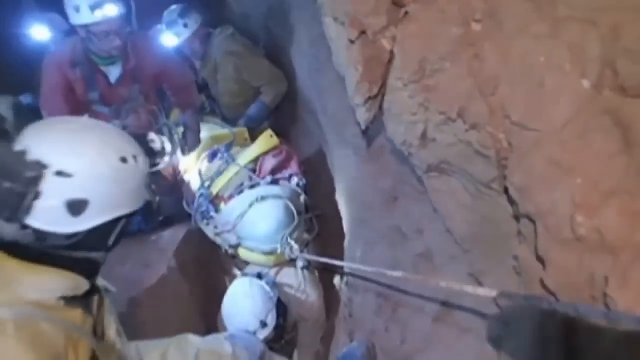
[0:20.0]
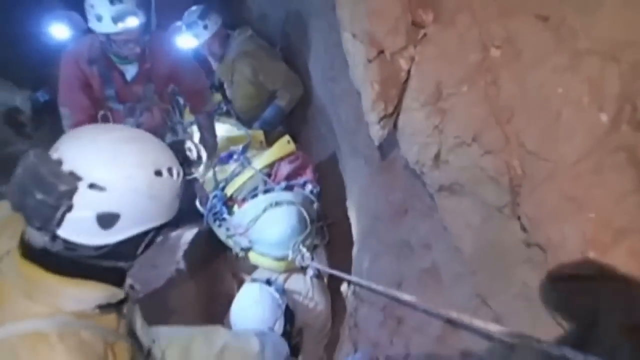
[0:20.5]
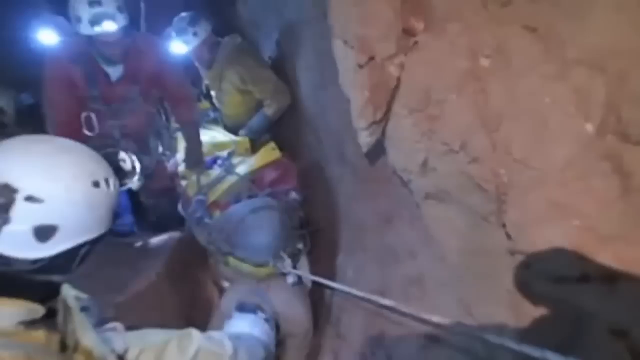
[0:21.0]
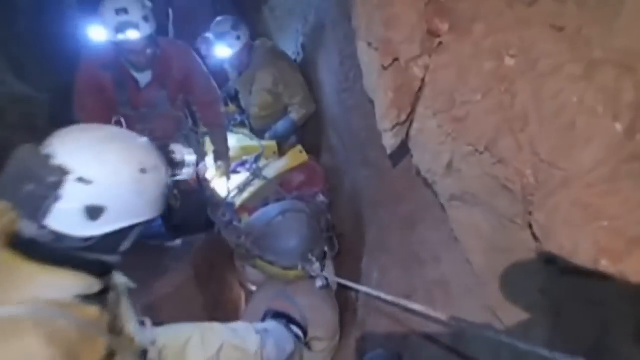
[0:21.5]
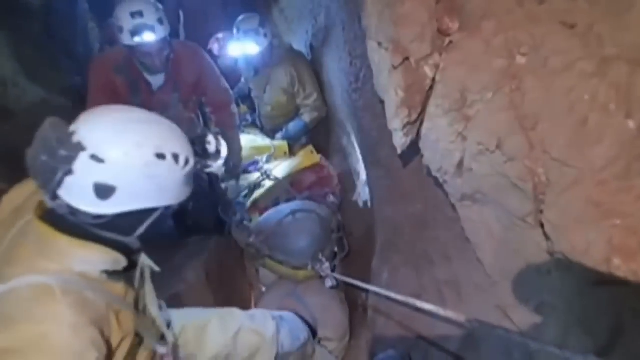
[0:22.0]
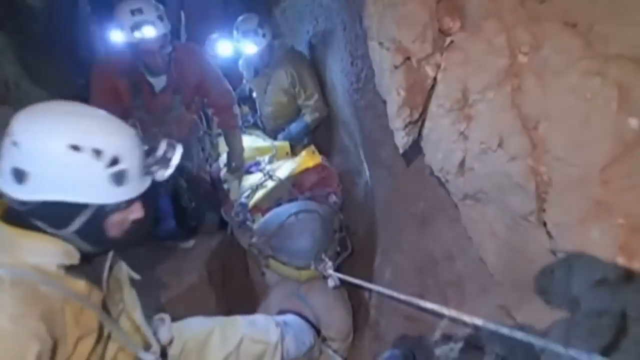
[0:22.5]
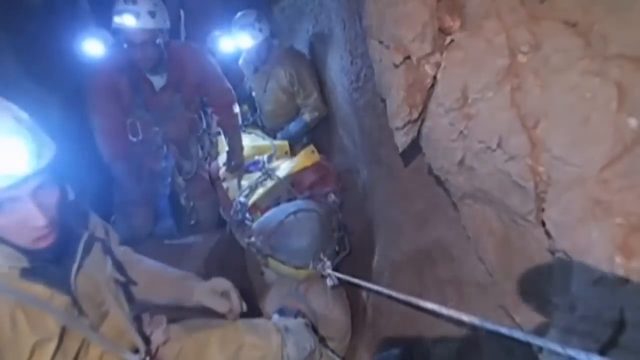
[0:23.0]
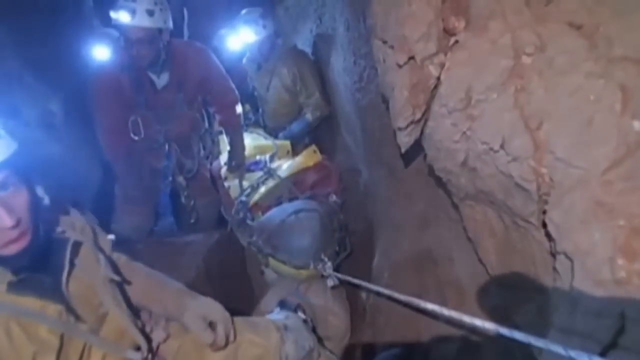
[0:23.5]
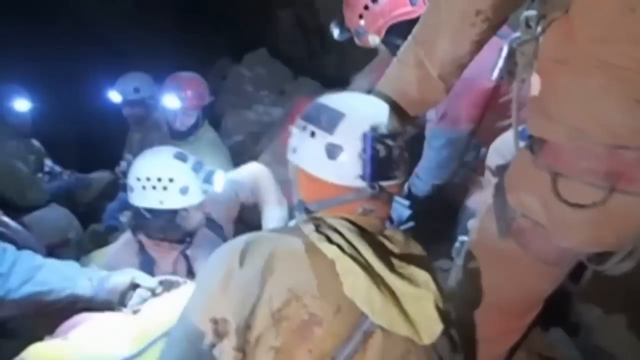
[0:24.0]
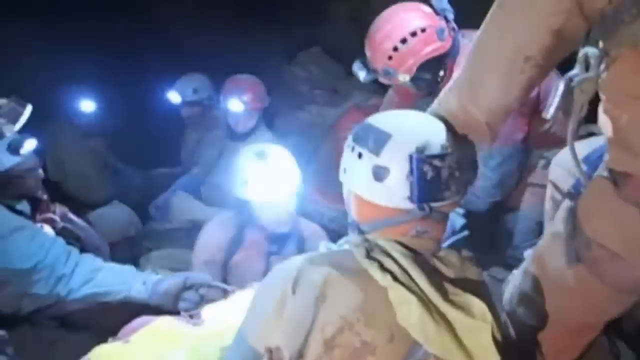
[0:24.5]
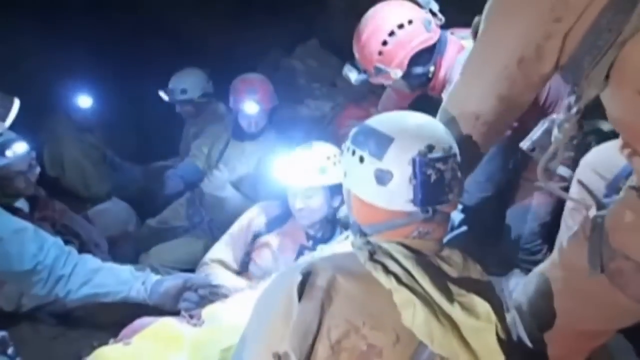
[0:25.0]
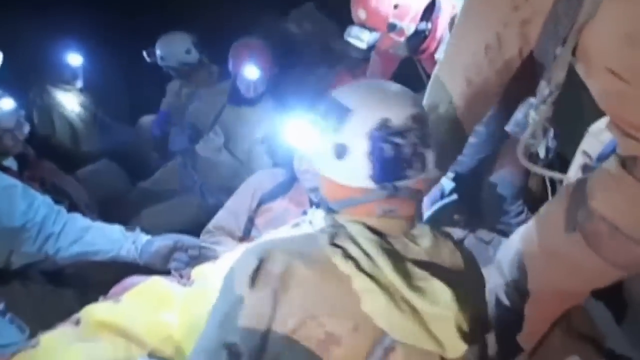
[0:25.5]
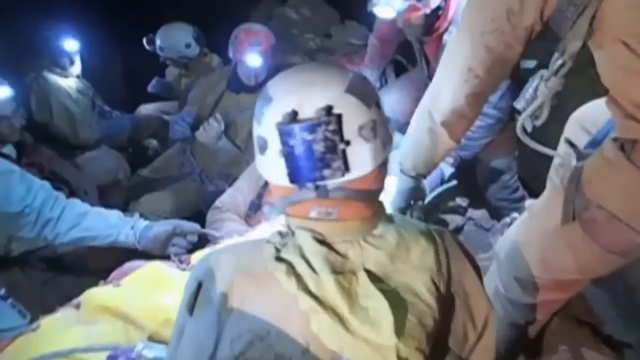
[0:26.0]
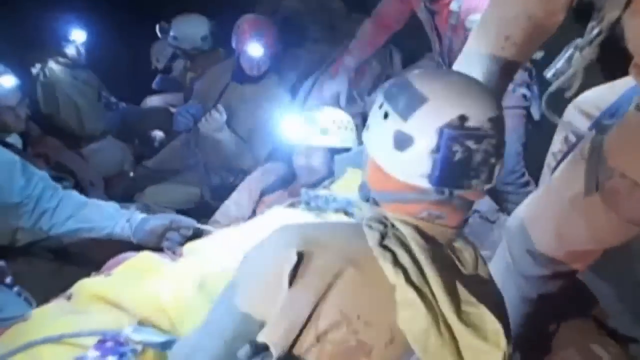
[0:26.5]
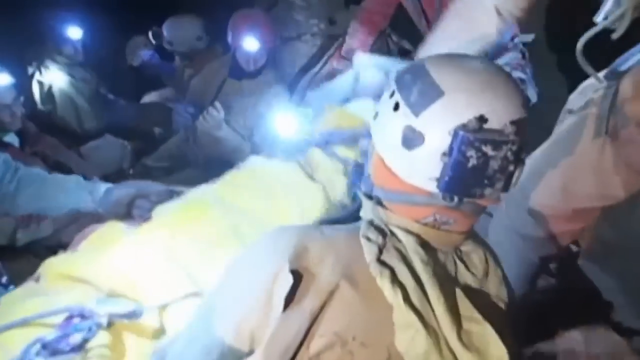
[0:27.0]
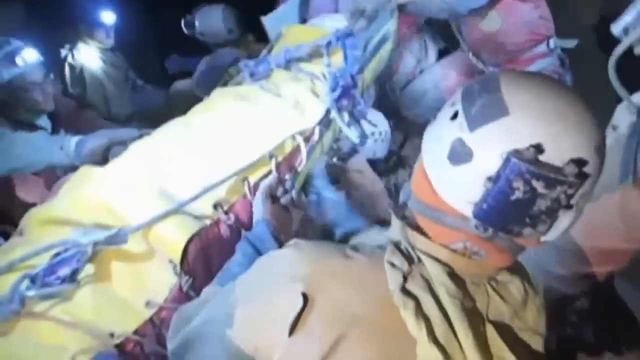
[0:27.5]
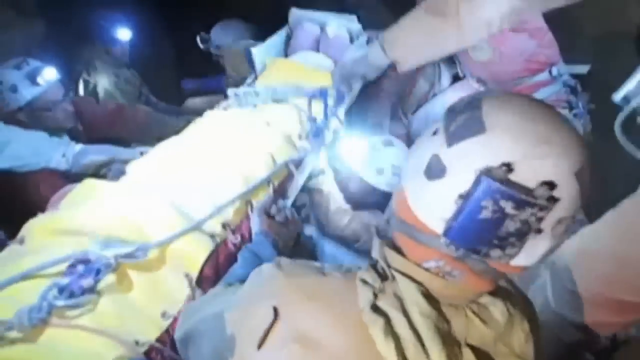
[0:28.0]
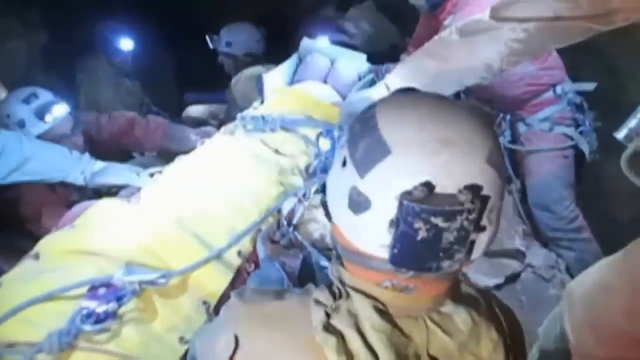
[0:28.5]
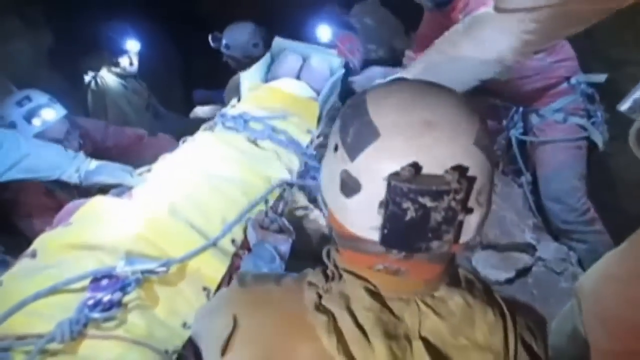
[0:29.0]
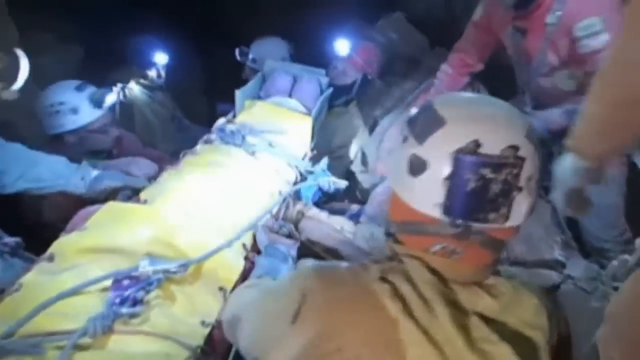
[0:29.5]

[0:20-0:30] What appears to be a cave rescue situation is shown against the red rock wall of the cave. An individual on the right side has a hard hat and rope tied around them, with a number of other individuals kind of gathered around them. There might be seven or eight individuals with hard hats and flashlights in this area, a tight, confined space that lets the camera show little beyond their gear and a bit of the place they are in. The group then moves a hardened board with a person lying on it, strapped to it. Rope is tied around the person, a yellow blanket is over the top of them, and their feet are kind of locked into position.